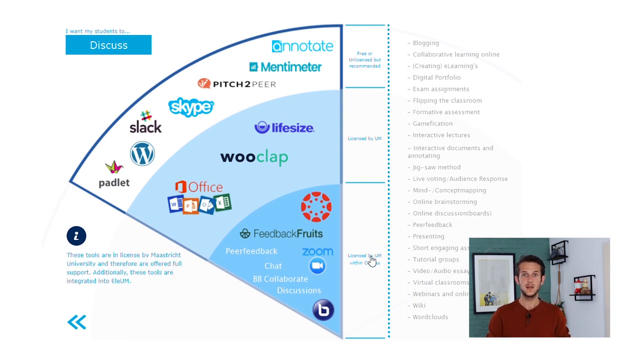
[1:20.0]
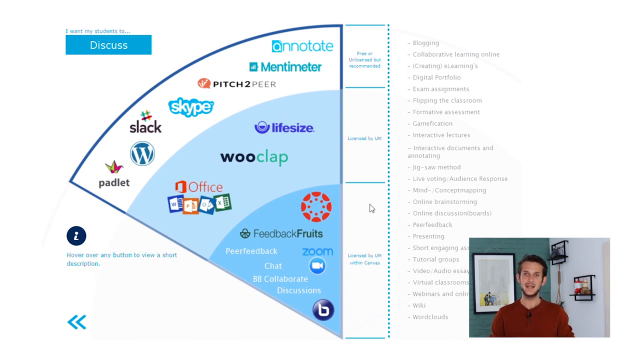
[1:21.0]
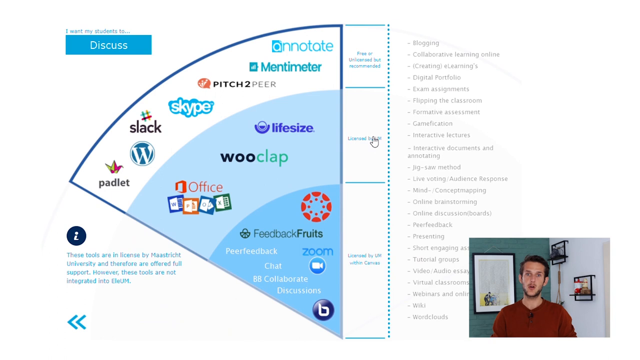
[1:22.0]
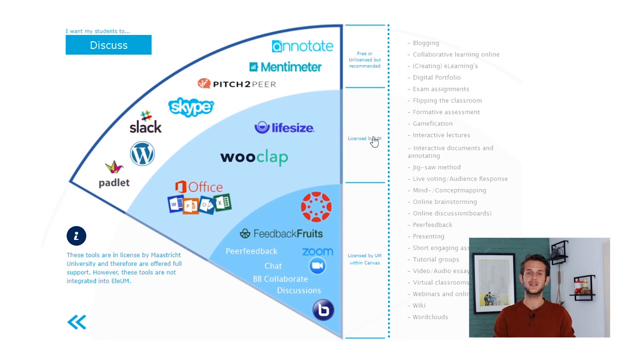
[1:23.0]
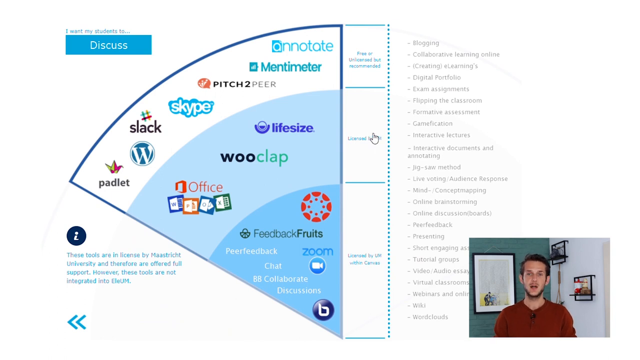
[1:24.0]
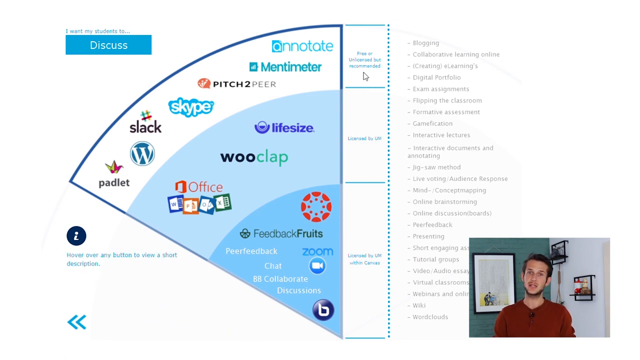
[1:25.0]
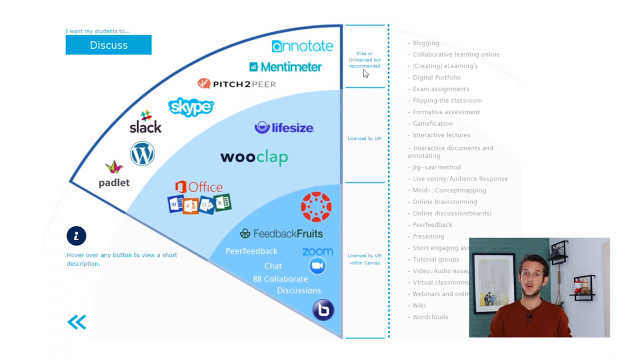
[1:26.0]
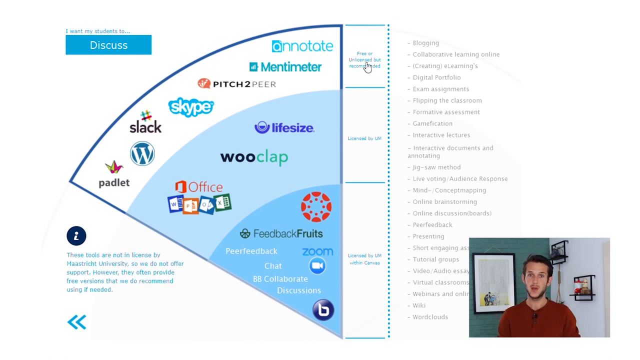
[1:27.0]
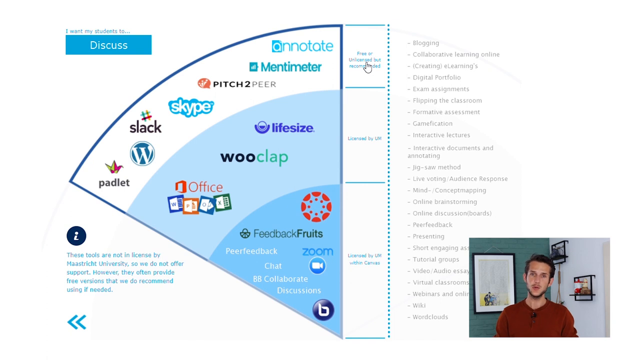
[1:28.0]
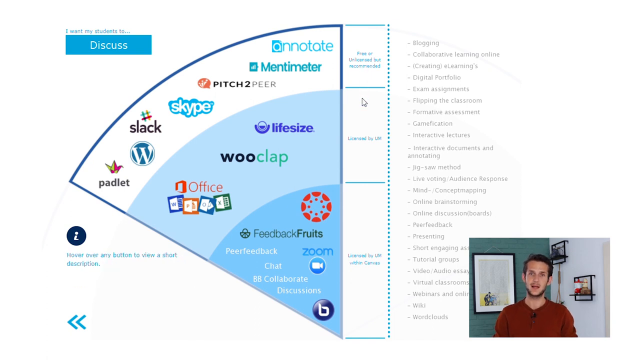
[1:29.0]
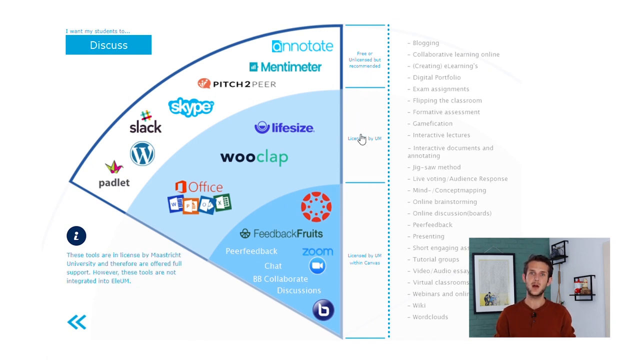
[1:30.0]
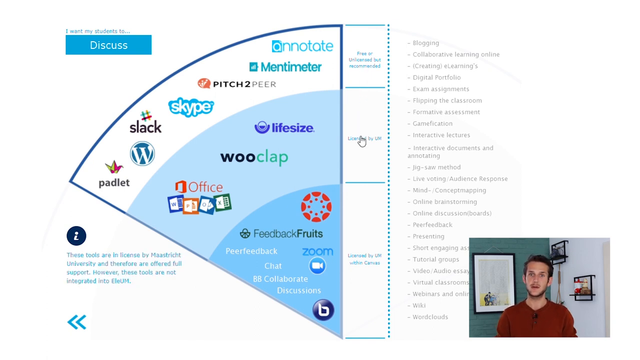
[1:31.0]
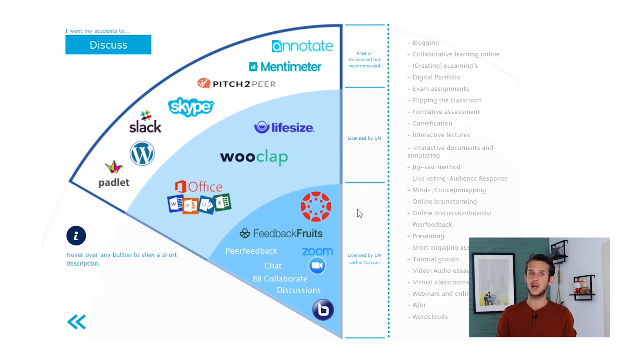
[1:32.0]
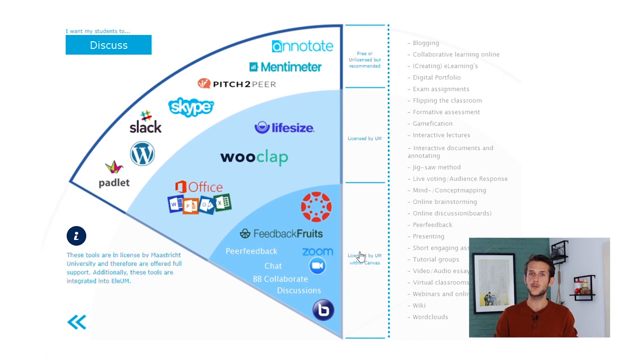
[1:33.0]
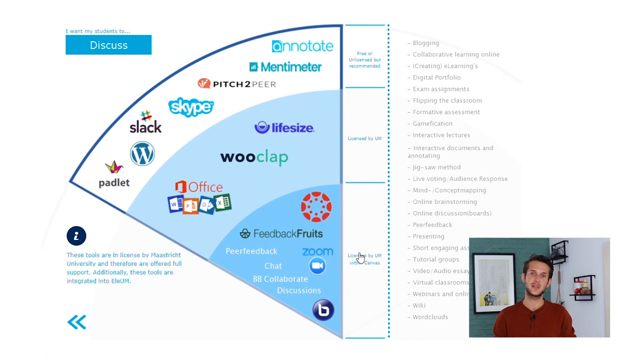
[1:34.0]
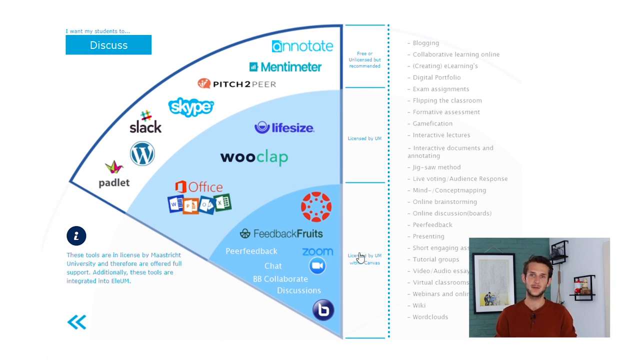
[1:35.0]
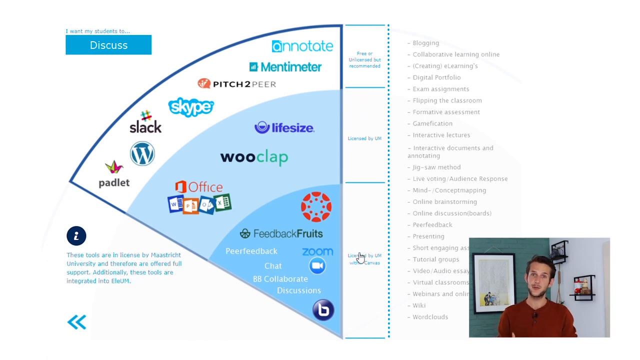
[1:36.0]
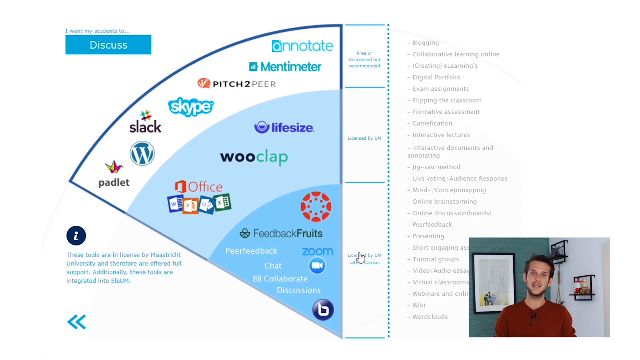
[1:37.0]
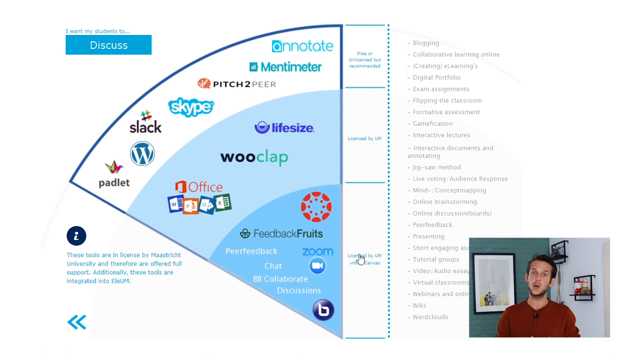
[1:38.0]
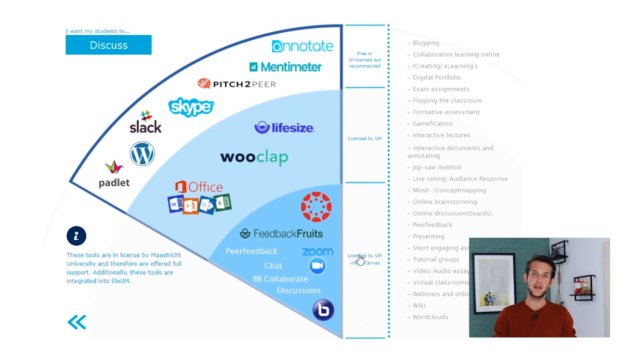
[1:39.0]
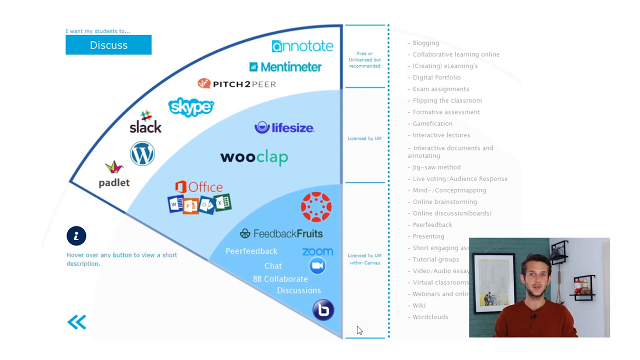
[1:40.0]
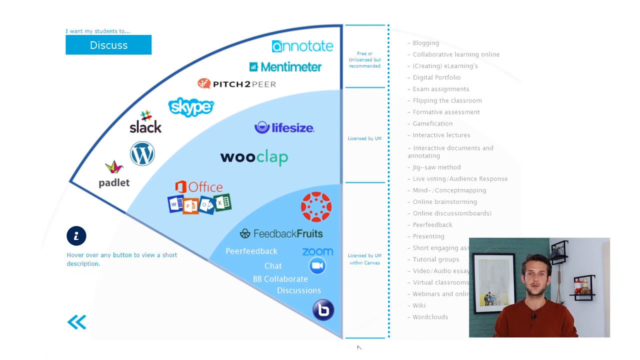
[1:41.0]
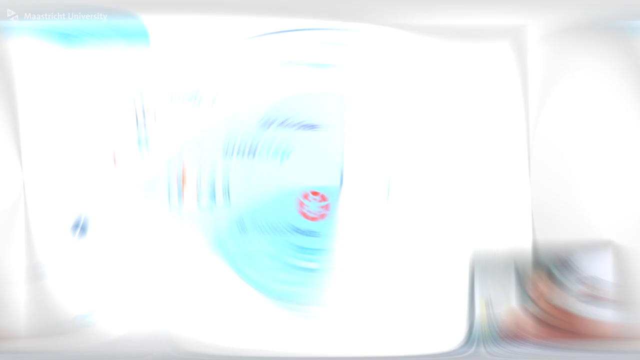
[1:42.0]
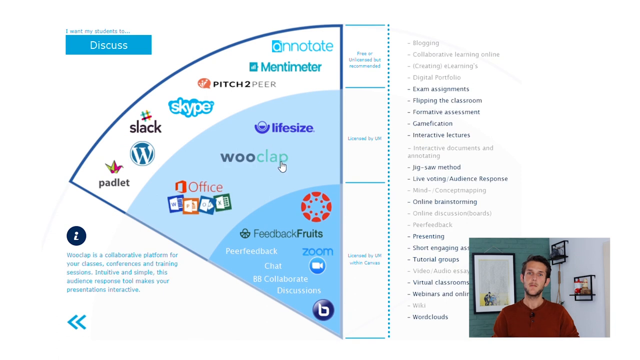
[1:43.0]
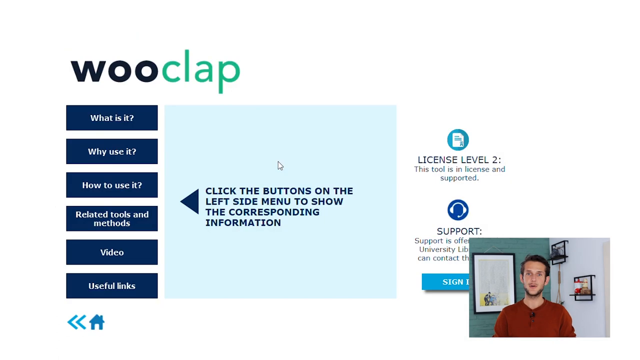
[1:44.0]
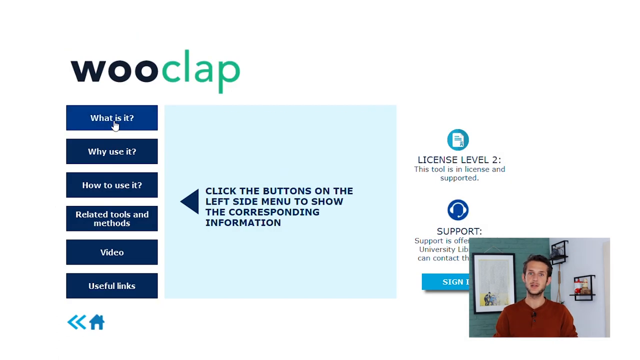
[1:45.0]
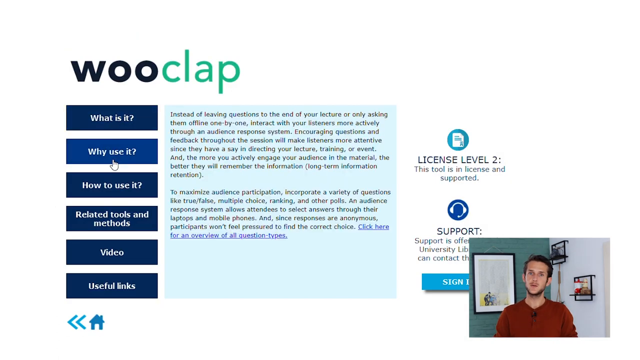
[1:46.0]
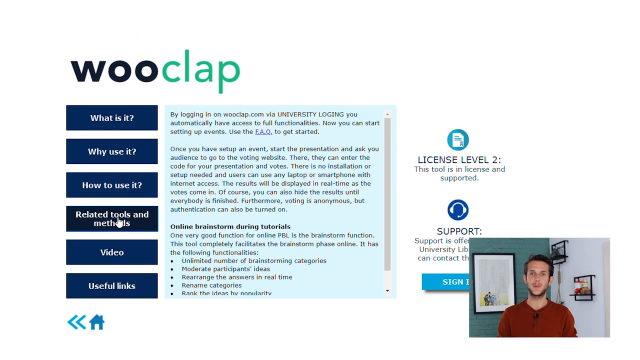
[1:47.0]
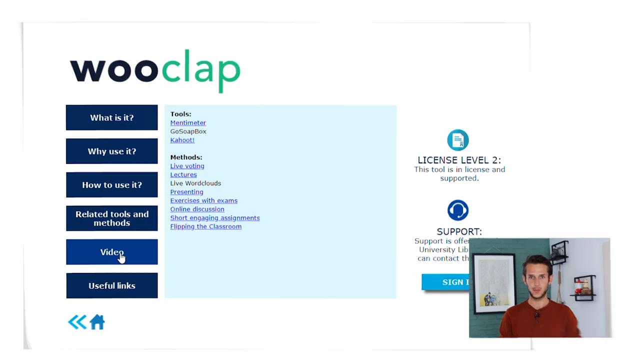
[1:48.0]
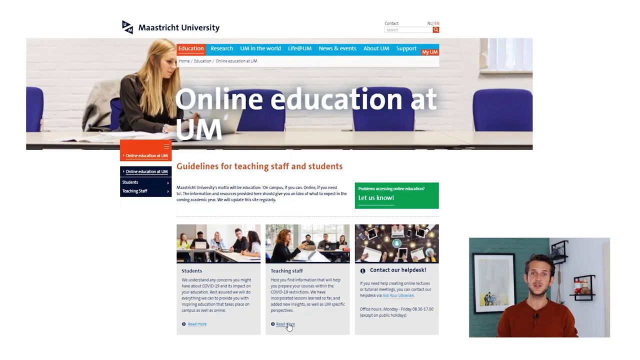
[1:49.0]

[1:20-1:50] He then hovers over the licensed tier, meaning tools licensed by the university with full support, and then over the top tier, meaning tools not licensed by the university and not supported, though they often have free versions that the university recommends. The cursor moves back to the second tier and then to the third, middle tier. Throughout the screen recording, a box at the bottom right shows the man still speaking to the camera. After a transition, the same slice screen returns, and the cursor clicks the WooClap platform in the middle tier. A WooClap page opens with a menu on the left containing buttons: what is it, why use it, how to use it, related tools and methods, video, and useful links. On the right it shows license level 2, meaning it is in use, licensed and supported, with support offered by the university library. The buttons in the left menu are clicked one by one down the list, revealing details, information and links, until video. The next shot shows a preview of the Maastricht University website.